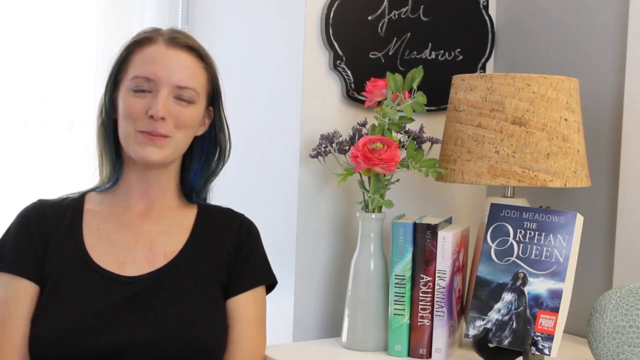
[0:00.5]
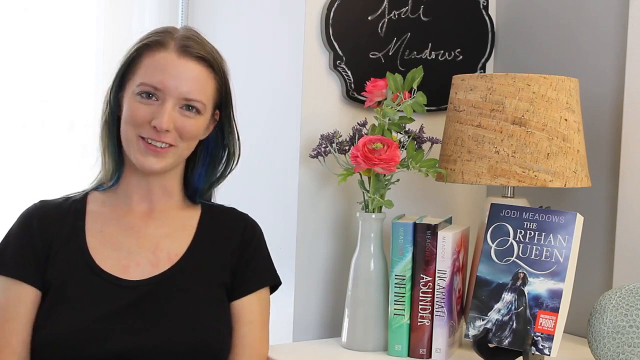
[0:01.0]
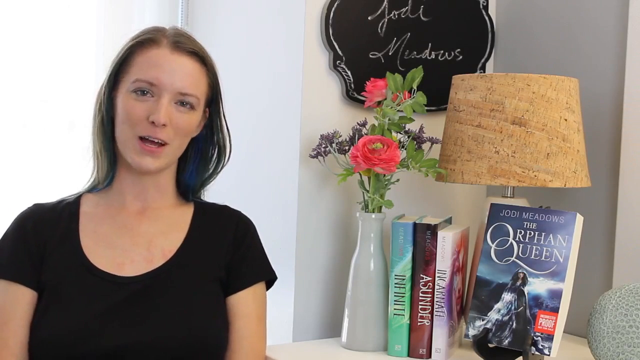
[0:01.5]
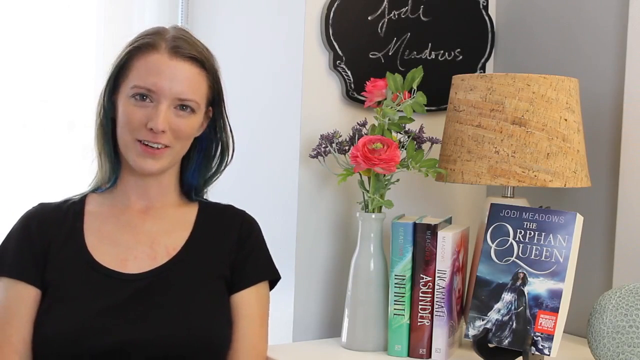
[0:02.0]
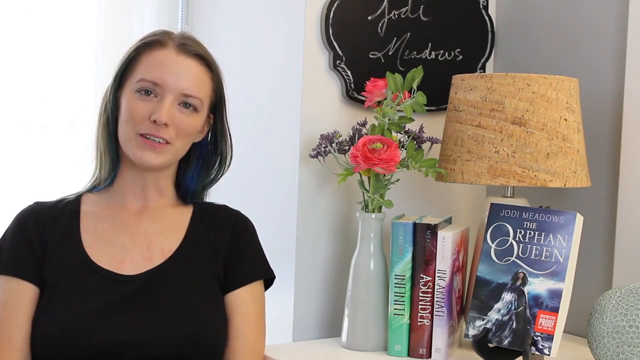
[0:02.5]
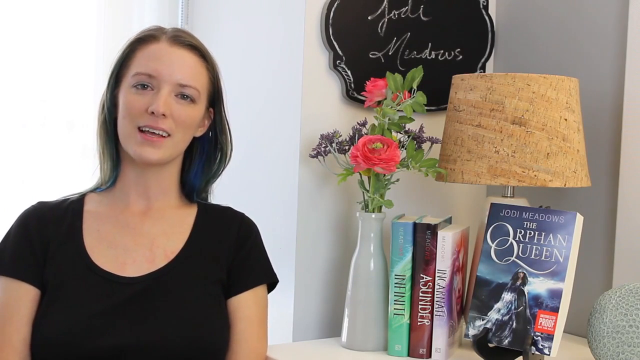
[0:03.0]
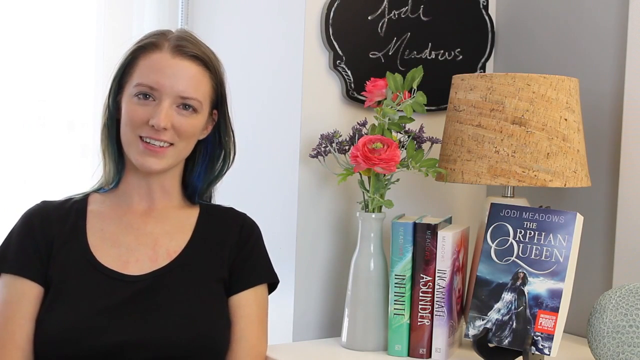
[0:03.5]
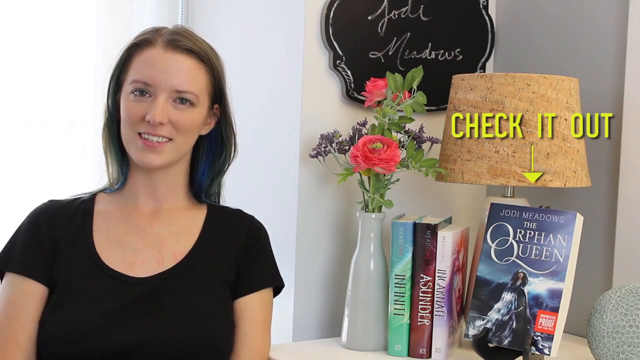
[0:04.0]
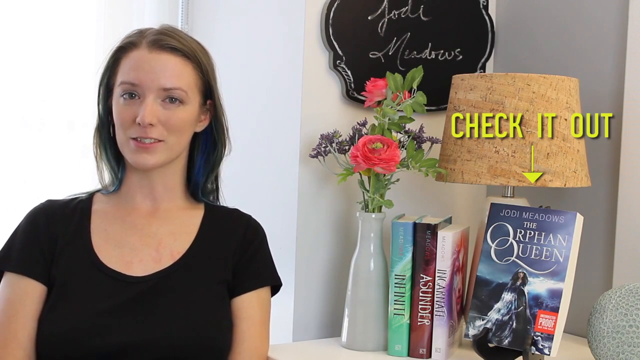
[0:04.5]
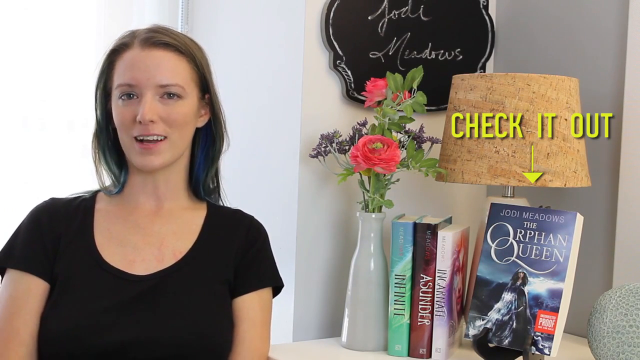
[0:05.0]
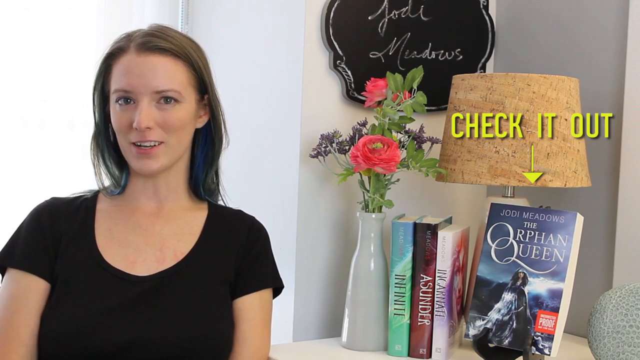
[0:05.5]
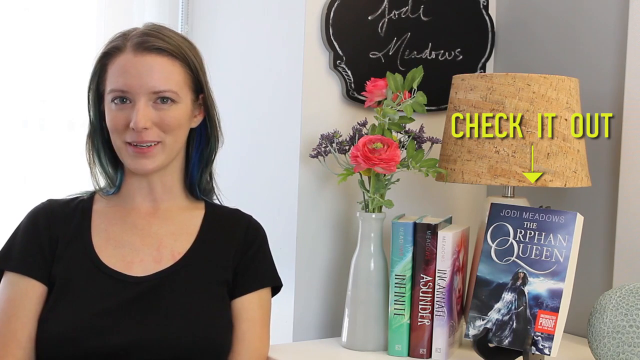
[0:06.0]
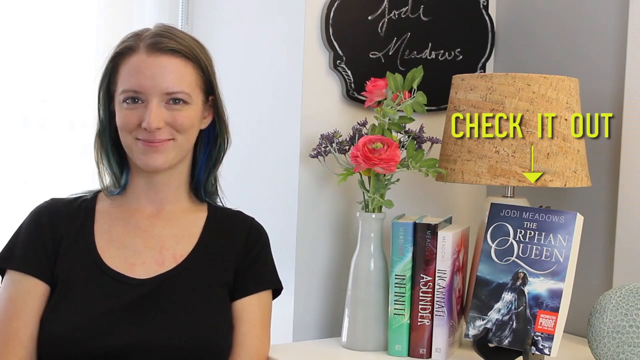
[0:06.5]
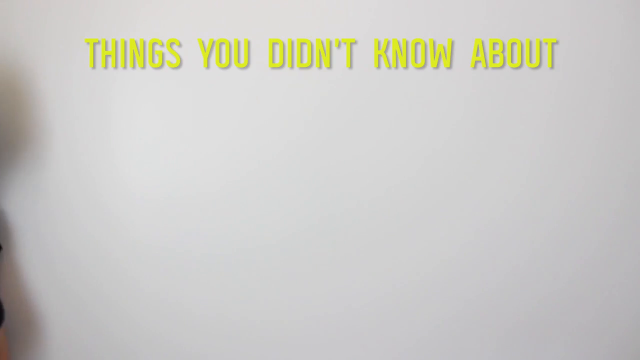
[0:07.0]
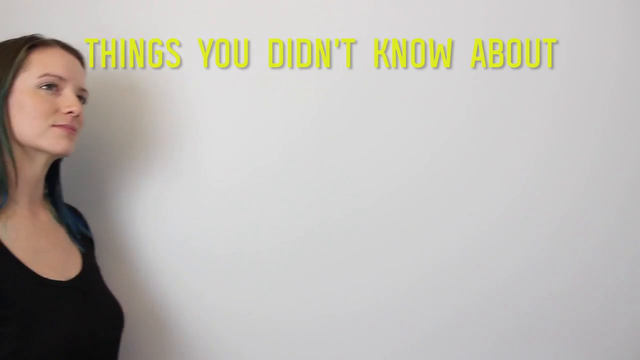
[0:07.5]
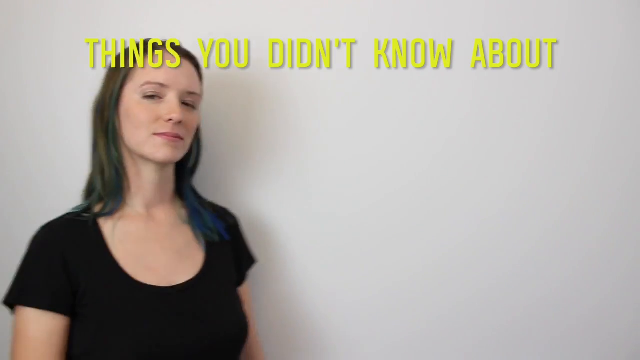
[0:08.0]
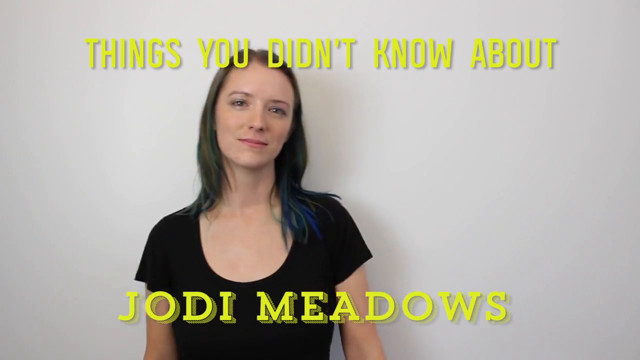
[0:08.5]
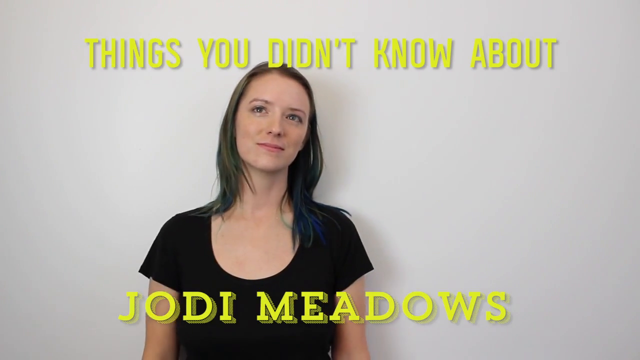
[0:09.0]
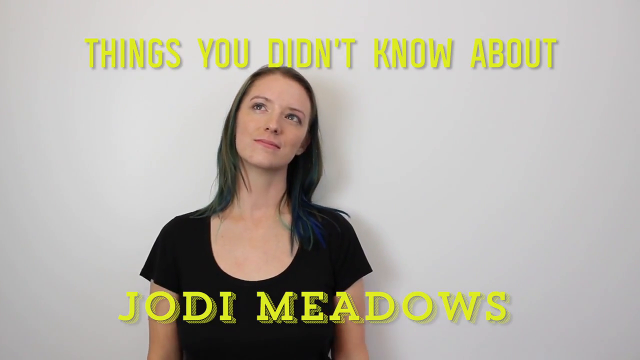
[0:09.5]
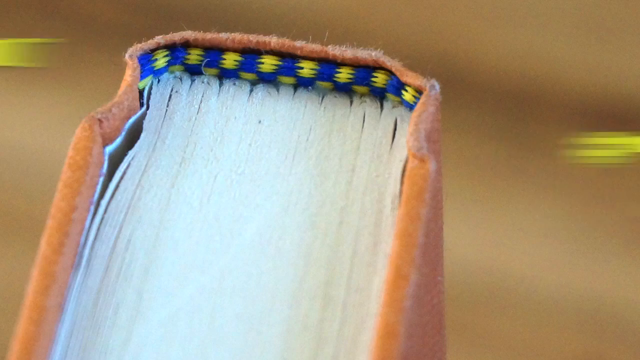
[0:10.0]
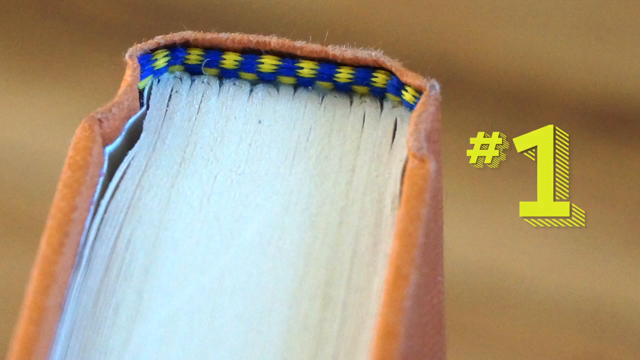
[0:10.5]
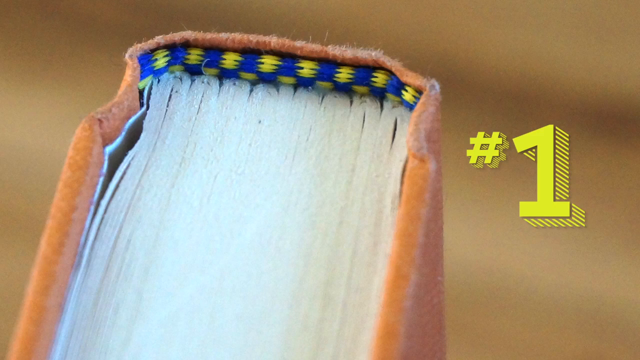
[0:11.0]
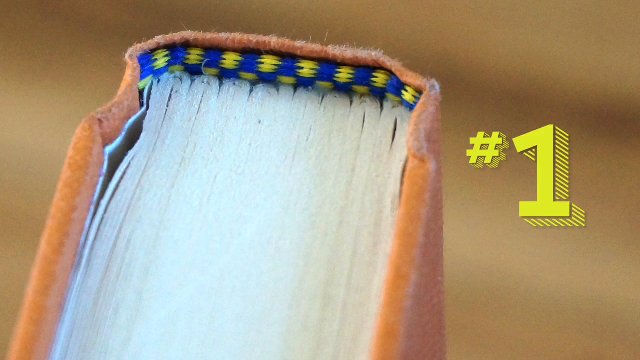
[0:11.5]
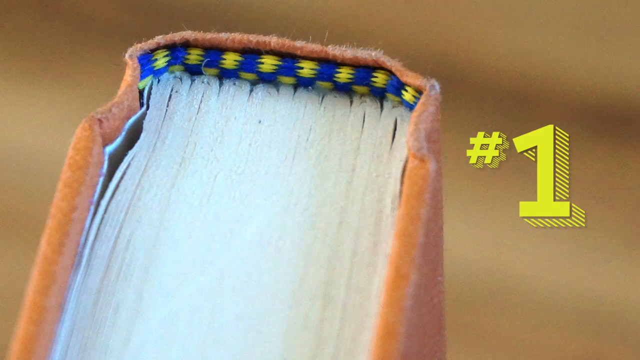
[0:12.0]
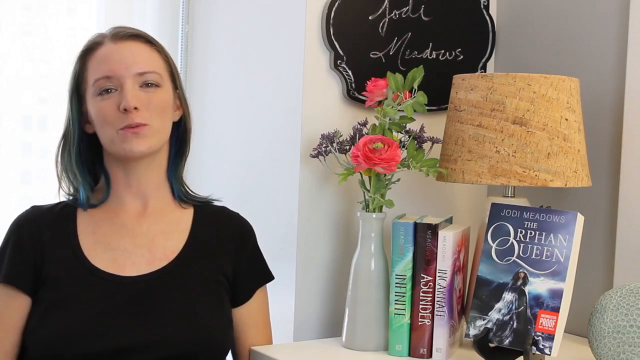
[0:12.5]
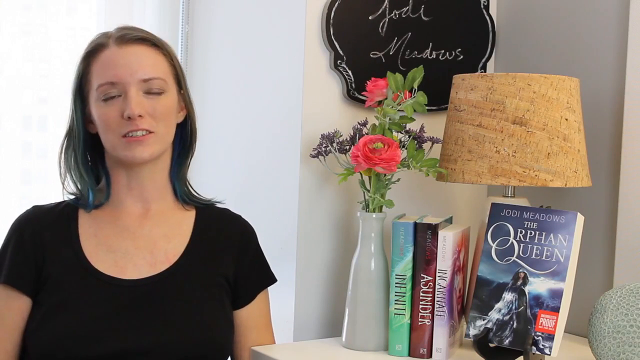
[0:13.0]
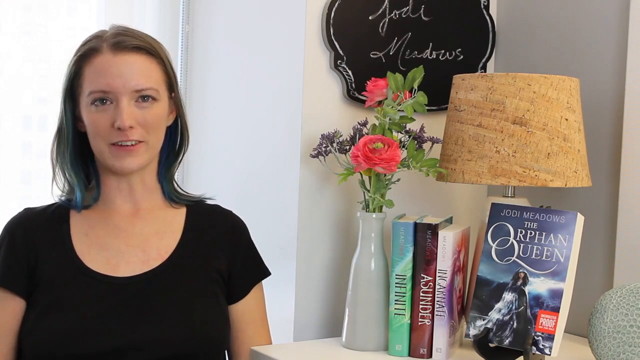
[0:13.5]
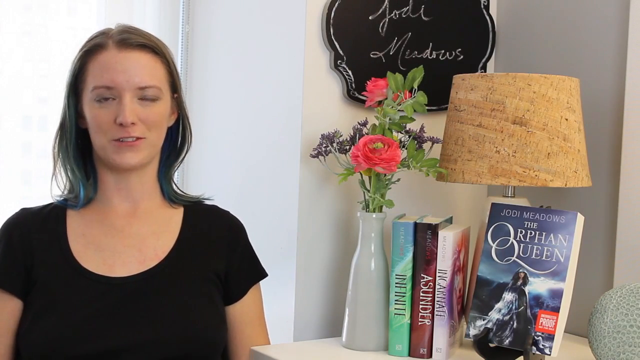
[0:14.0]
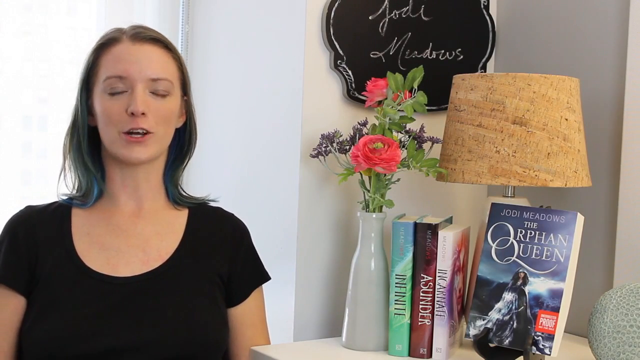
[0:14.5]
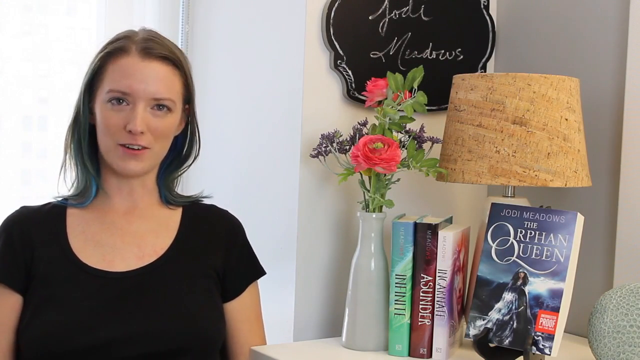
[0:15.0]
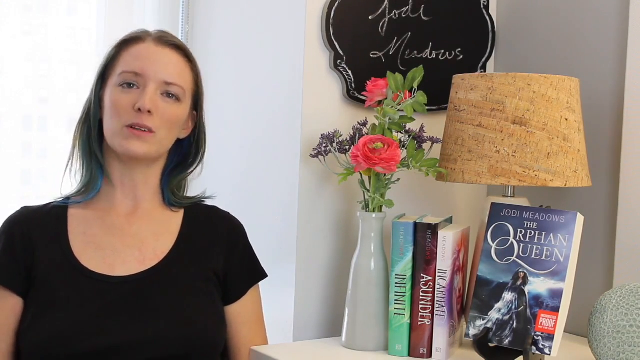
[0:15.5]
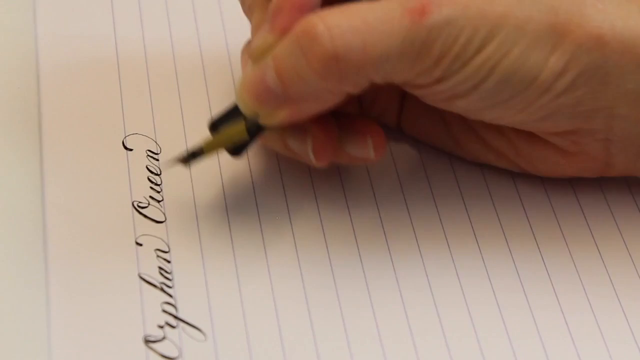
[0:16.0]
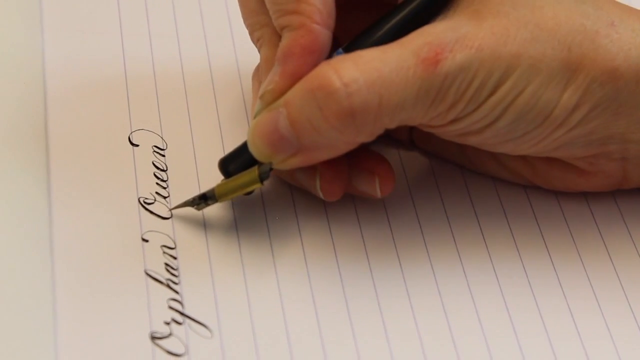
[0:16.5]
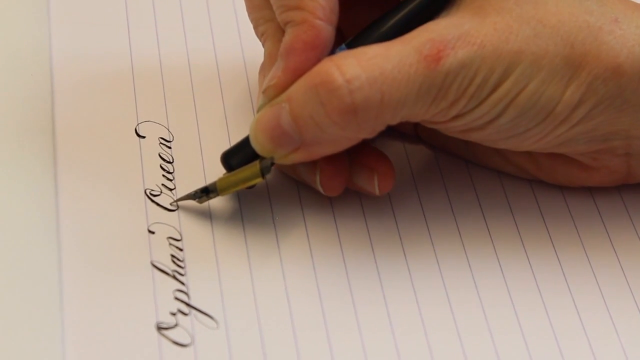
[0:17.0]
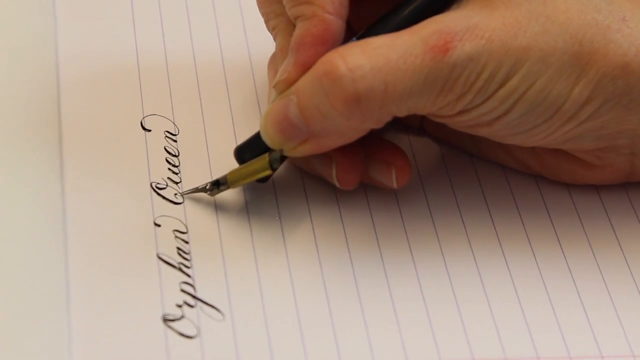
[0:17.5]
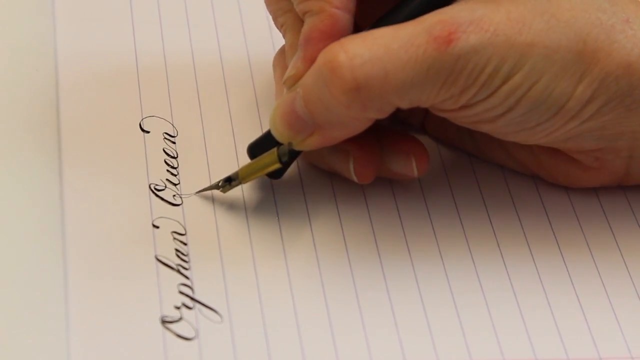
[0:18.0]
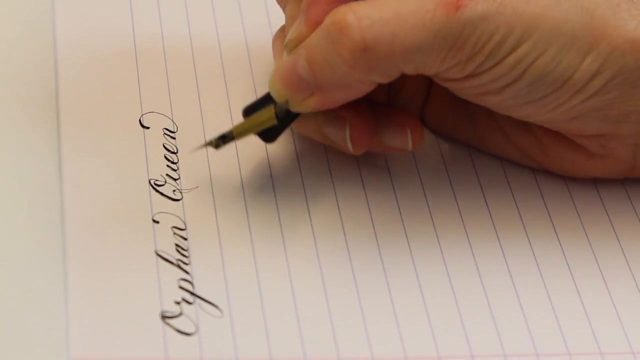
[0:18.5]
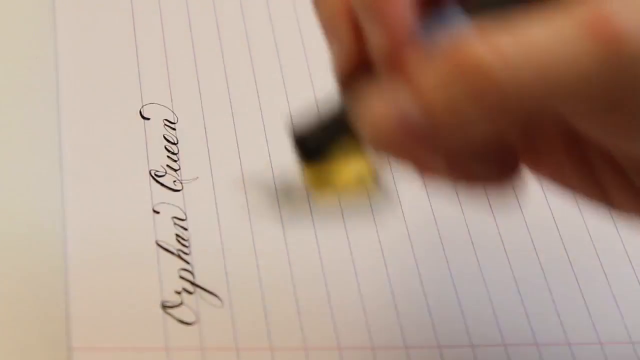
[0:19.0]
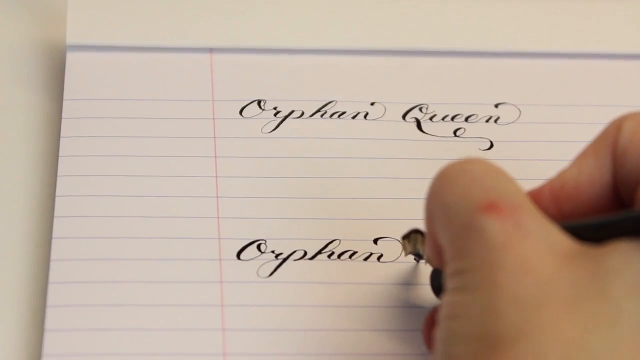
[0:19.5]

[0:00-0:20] A woman sits next to a bookshelf and talks into the camera. She wears a short black shirt and has long brown hair and brown eyes. The name "Jodi Meadows" is written on a small blackboard above the shelf. The shelf holds a lamp and a vase with pink flowers, and a book called The Orphan Queen by Jodi Meadows is turned toward the camera. The woman keeps speaking, smiling. A caption reading "Check it out" appears over The Orphan Queen book, with a yellow arrow pointing to it. The video cuts to a white wall; the woman walks into the center, and yellow captions appear reading "Things you didn't know about Jodi Meadows". Next comes a close-up of the spine of a book with a yellow number 1 on screen. The video cuts back to the woman in front of the bookshelf, then to a person handwriting intricate calligraphy on notebook paper.